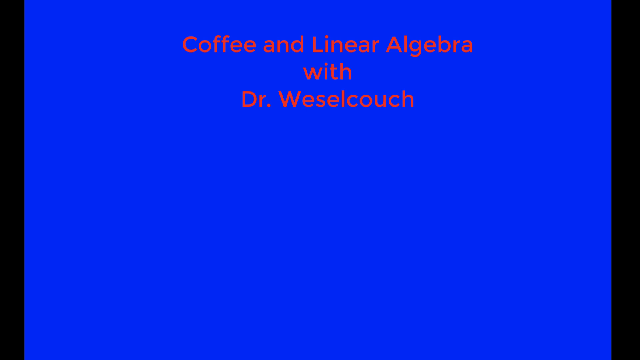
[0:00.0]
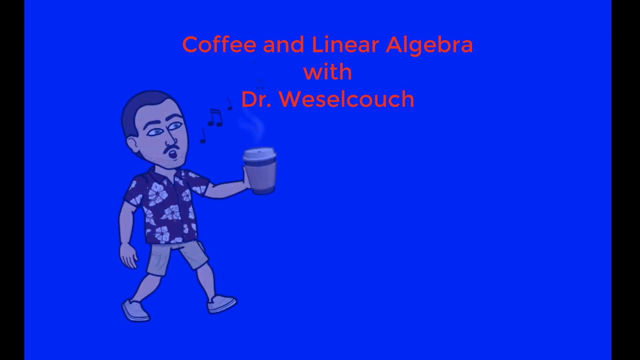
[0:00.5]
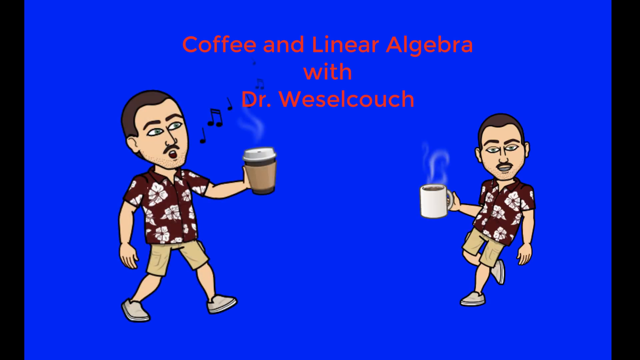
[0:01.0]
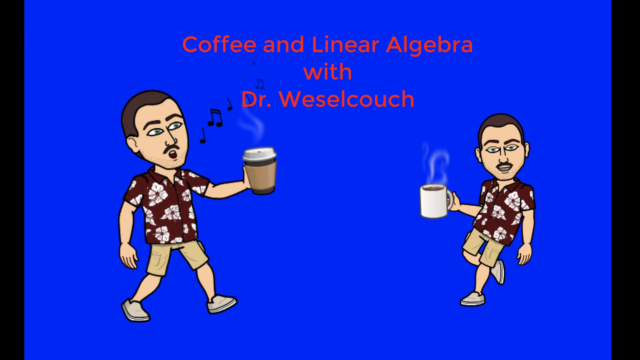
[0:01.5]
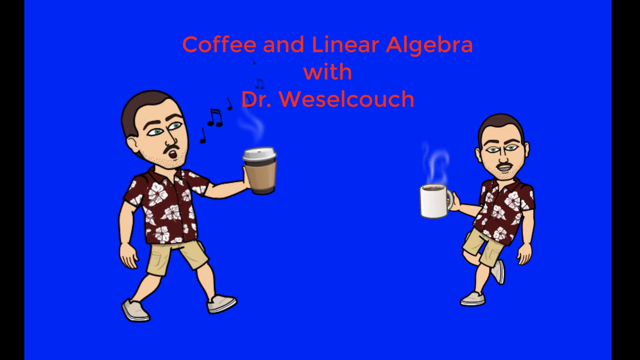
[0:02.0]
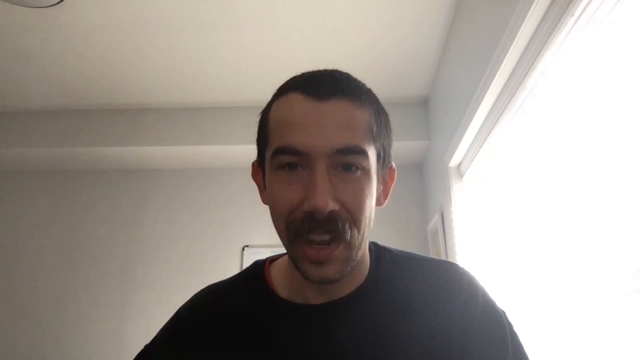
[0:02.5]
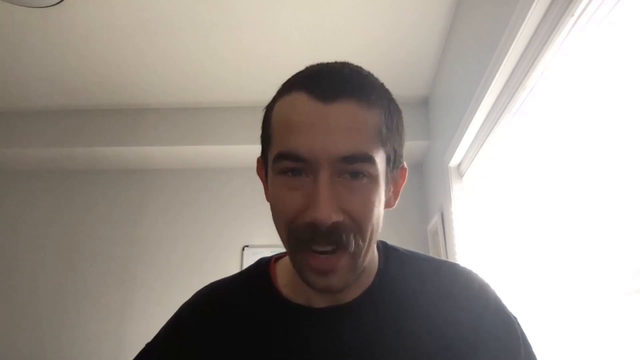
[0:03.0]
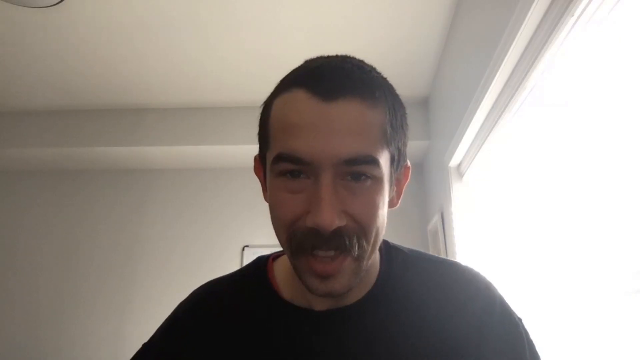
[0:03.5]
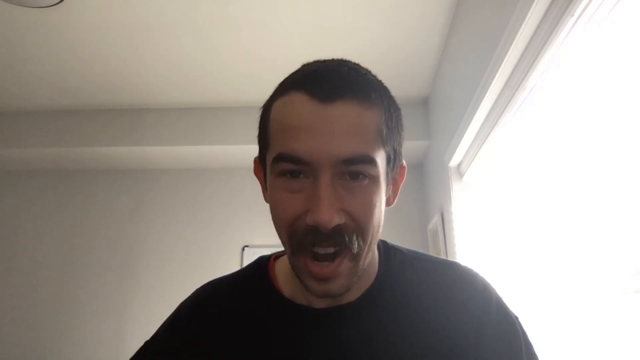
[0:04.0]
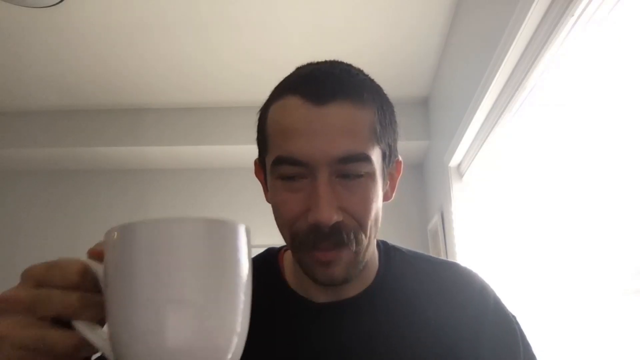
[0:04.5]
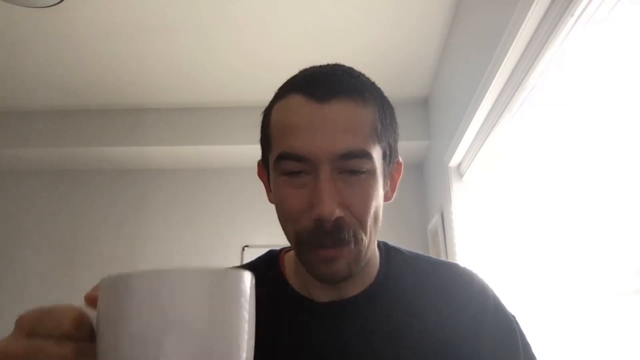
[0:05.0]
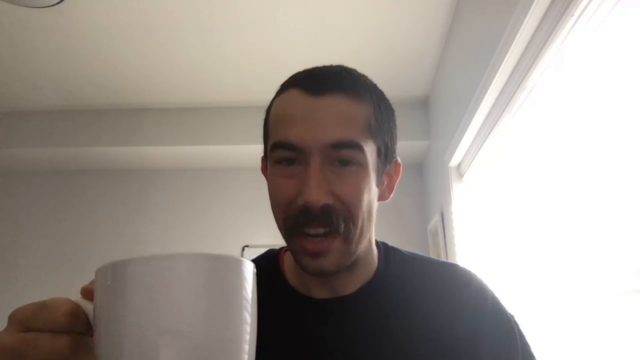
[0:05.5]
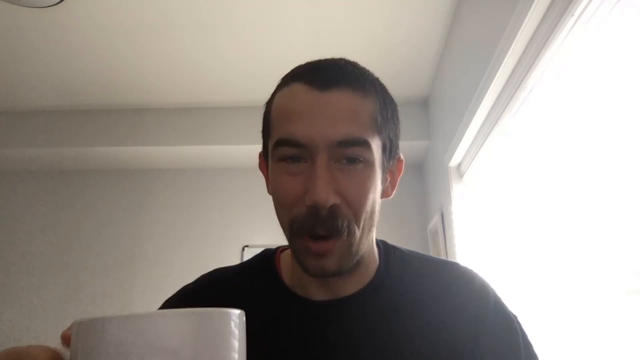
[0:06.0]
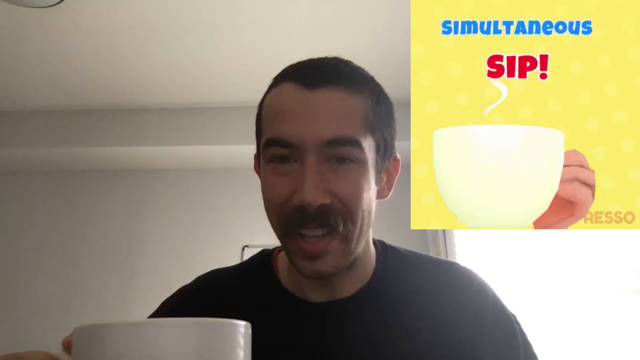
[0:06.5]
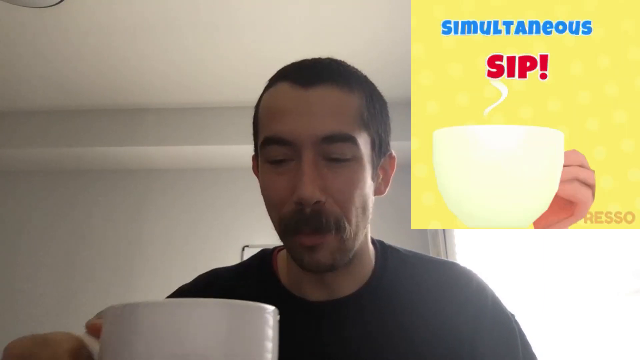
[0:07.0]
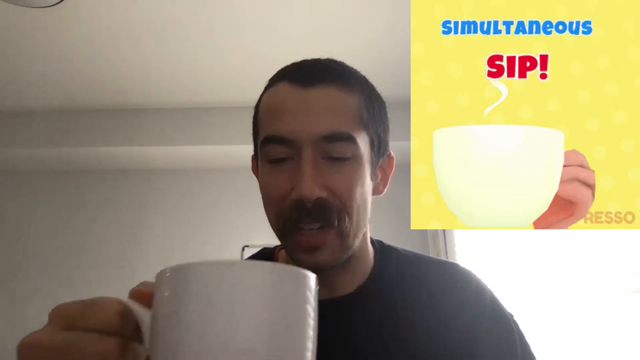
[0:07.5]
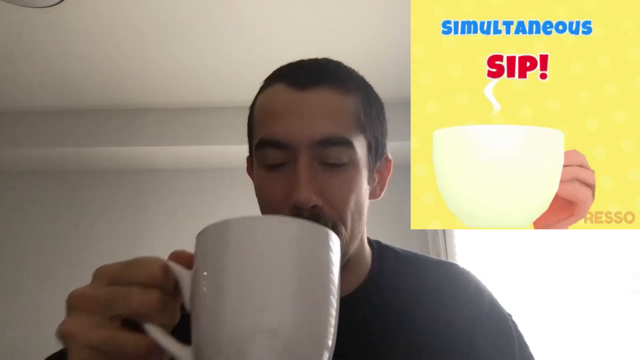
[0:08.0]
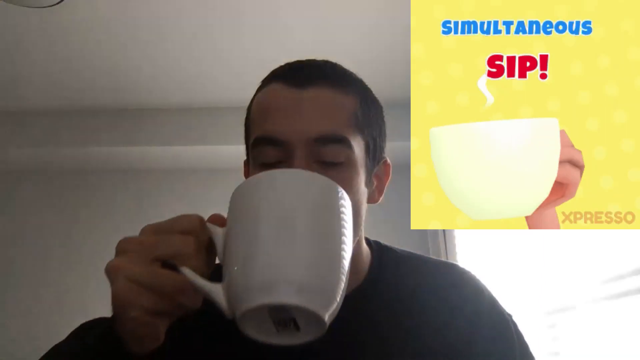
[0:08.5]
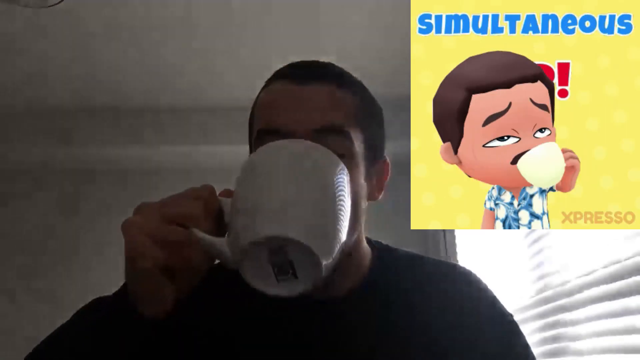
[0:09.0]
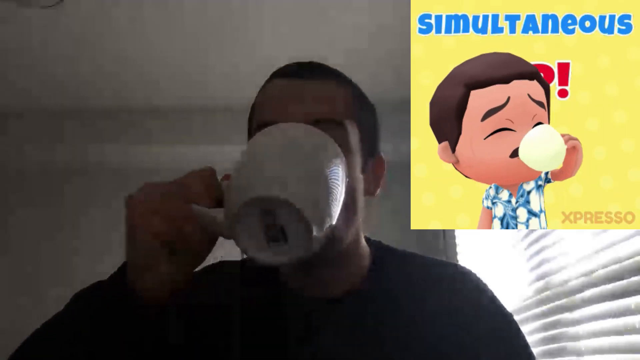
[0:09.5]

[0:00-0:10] A little cartoon man wearing a Hawaiian shirt, khaki shorts, and gray pants holds a coffee cup and appears to be whistling a tune. He has black hair and a black mustache. The background is a blue screen, and red letters read "Coffee and Linear Algebra with Dr. Wesselkoutch." A second cartoon man who looks exactly the same appears on the right of the screen; he holds a coffee mug, is slightly leaned back, and looks like he may be trying to lean against a wall. The video then cuts to a man who looks similar to the cartoon figure, with a black mustache, black hair, and a slender face; he holds a white coffee mug and takes a sip. In the right-hand corner a yellow box pops up with "simultaneous" in blue letters outlined in white, and below it "sip!" in red letters, and a little cartoon figure in the Hawaiian shirt appears and takes a sip of coffee from the mug.